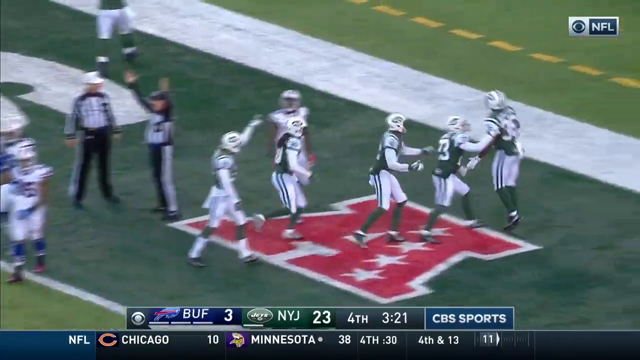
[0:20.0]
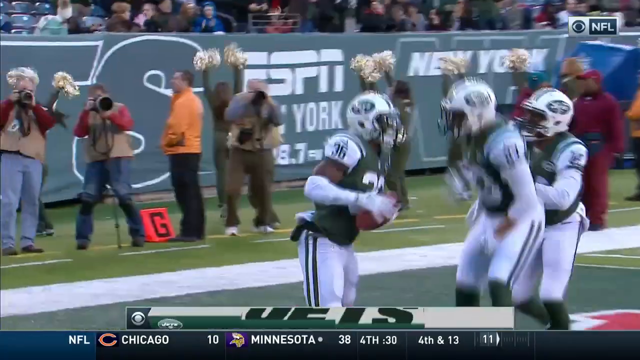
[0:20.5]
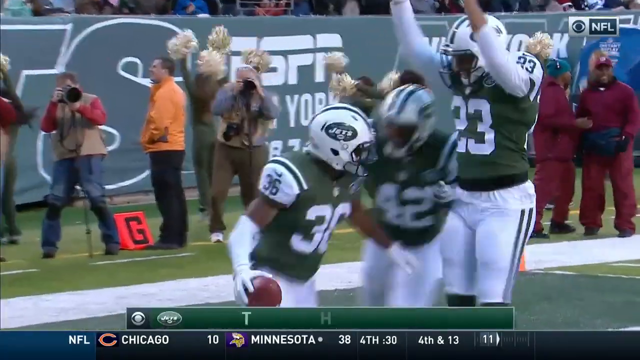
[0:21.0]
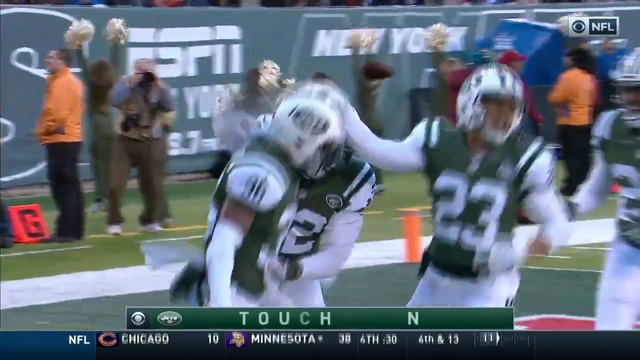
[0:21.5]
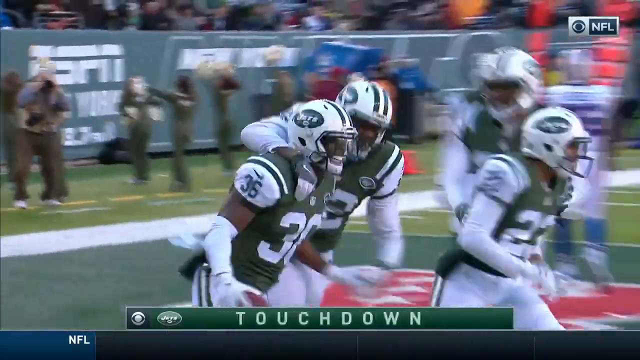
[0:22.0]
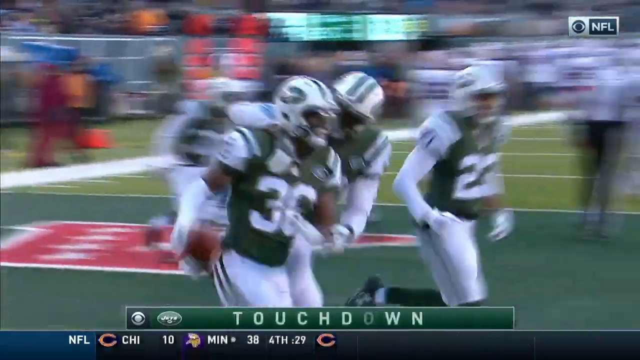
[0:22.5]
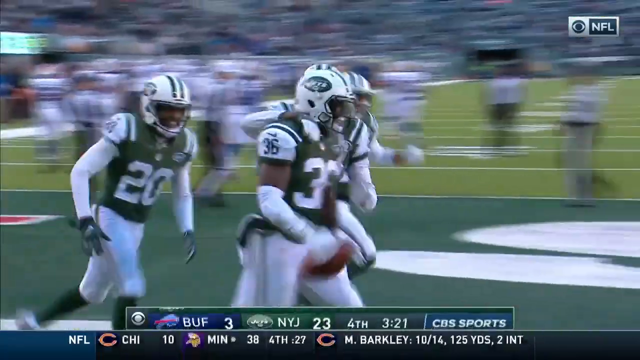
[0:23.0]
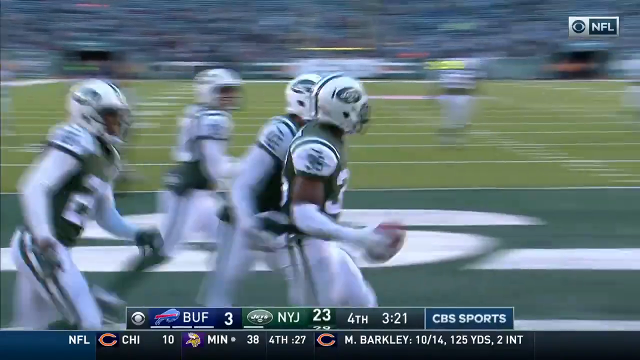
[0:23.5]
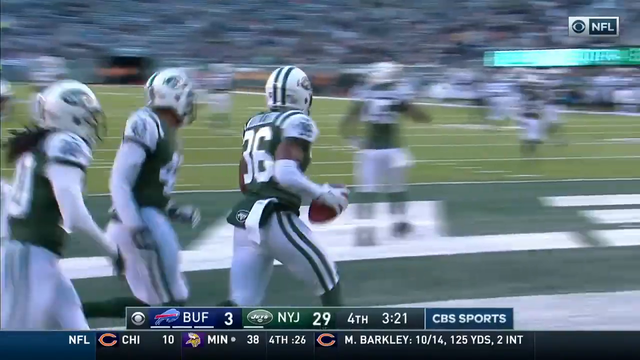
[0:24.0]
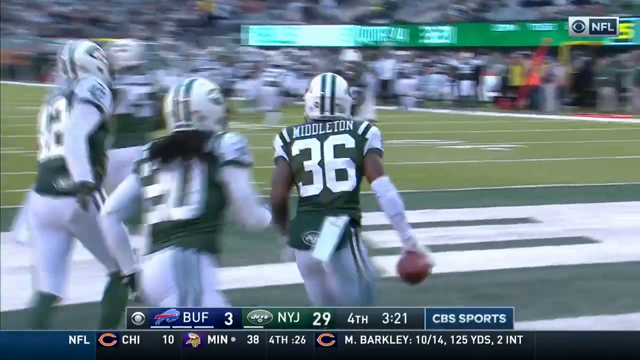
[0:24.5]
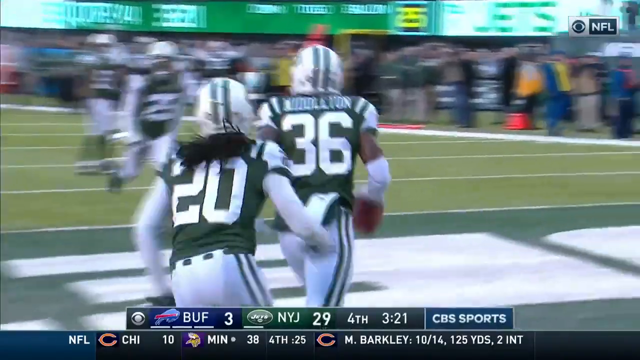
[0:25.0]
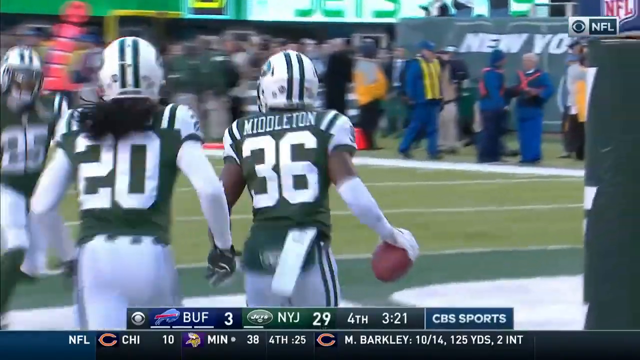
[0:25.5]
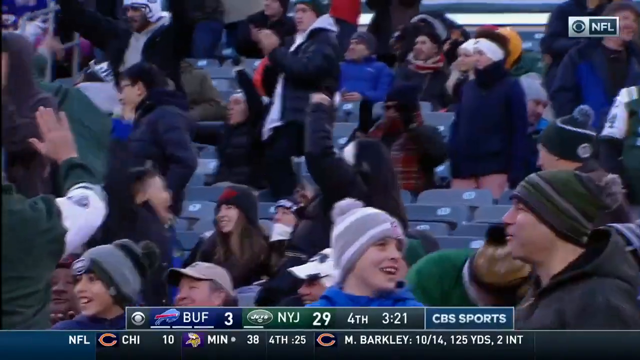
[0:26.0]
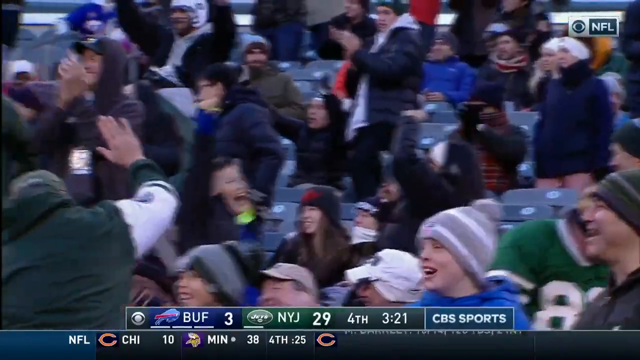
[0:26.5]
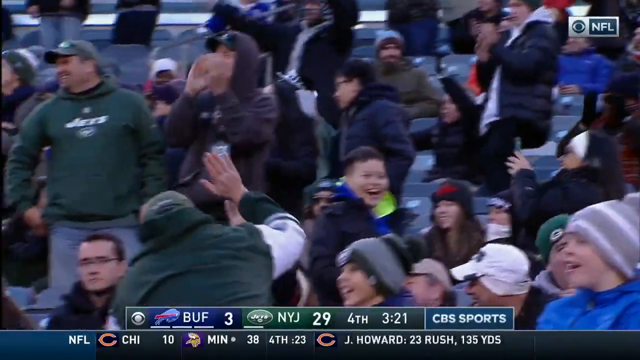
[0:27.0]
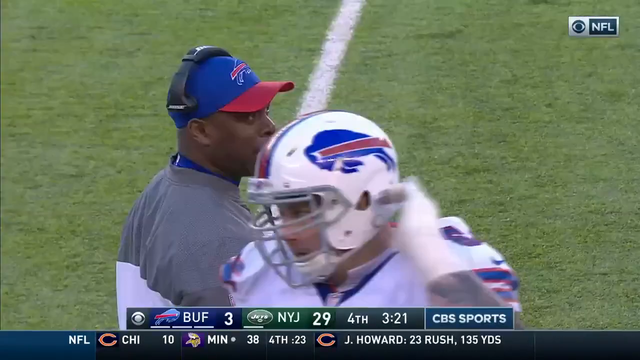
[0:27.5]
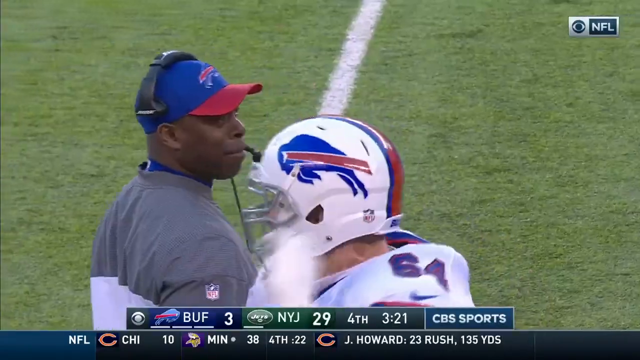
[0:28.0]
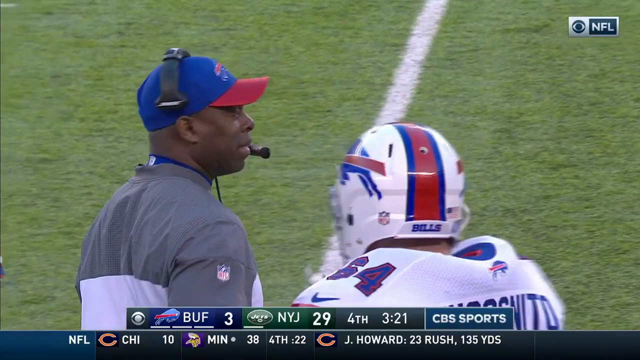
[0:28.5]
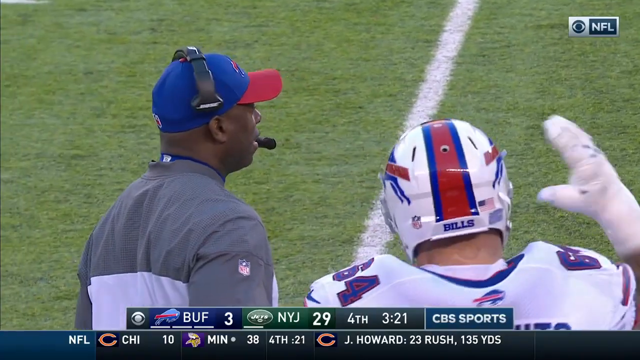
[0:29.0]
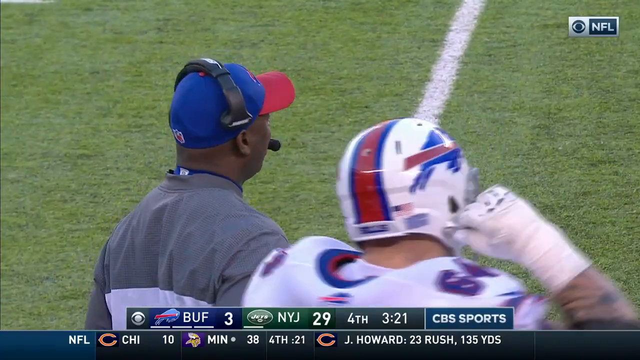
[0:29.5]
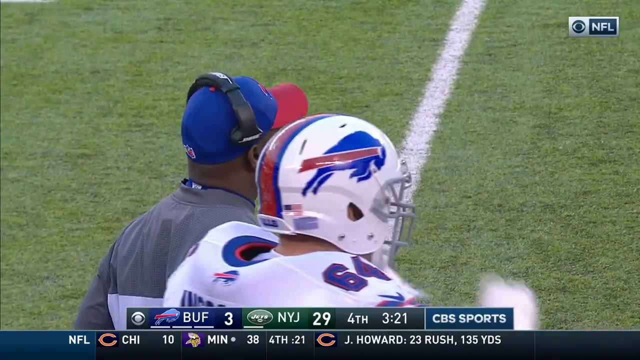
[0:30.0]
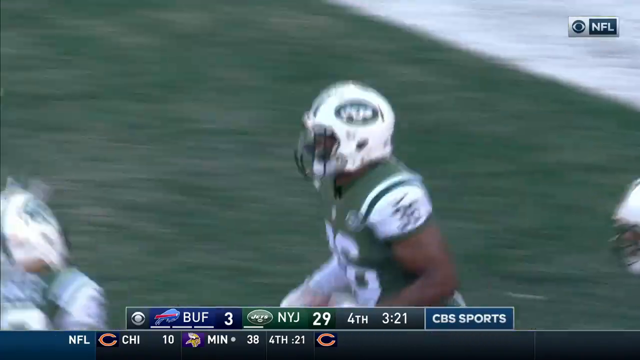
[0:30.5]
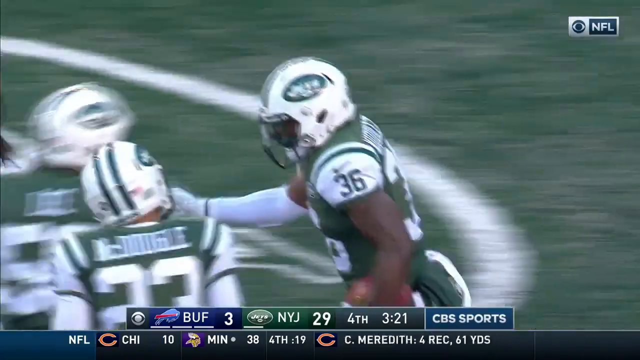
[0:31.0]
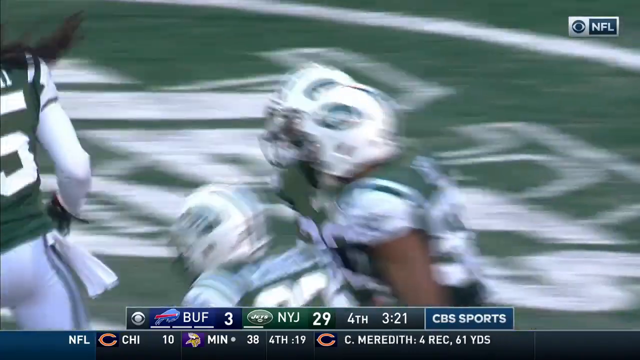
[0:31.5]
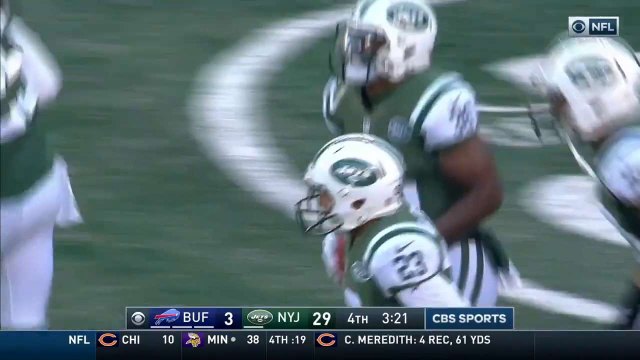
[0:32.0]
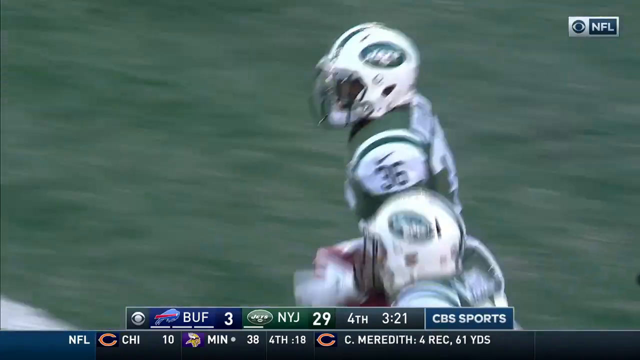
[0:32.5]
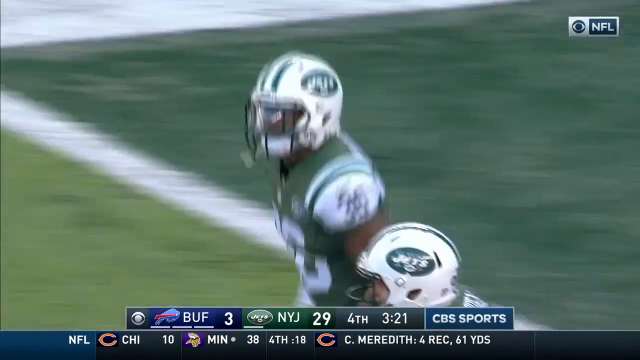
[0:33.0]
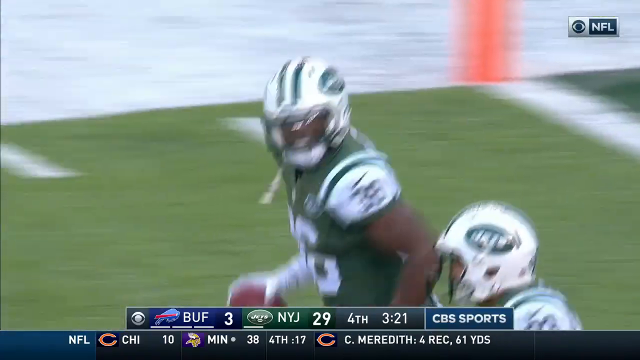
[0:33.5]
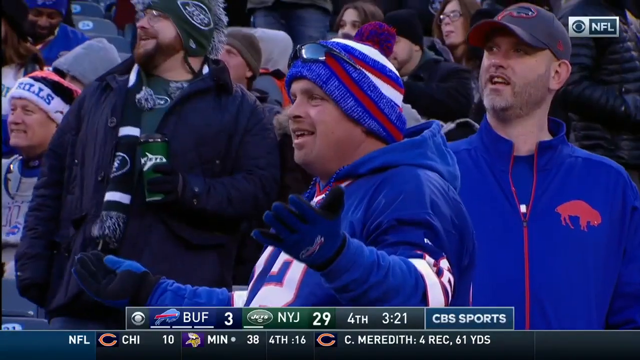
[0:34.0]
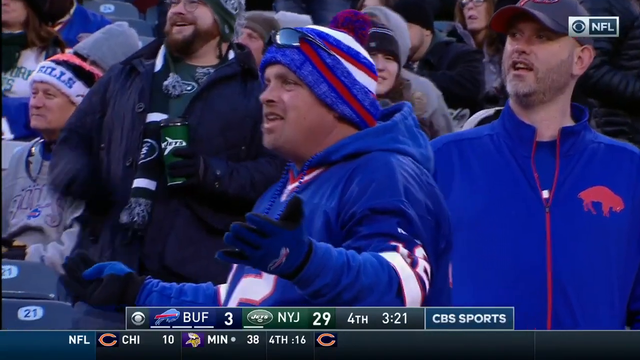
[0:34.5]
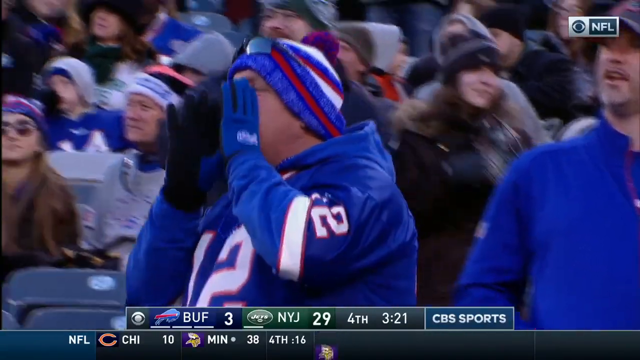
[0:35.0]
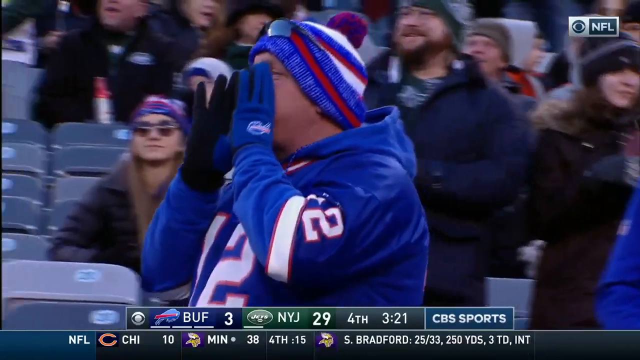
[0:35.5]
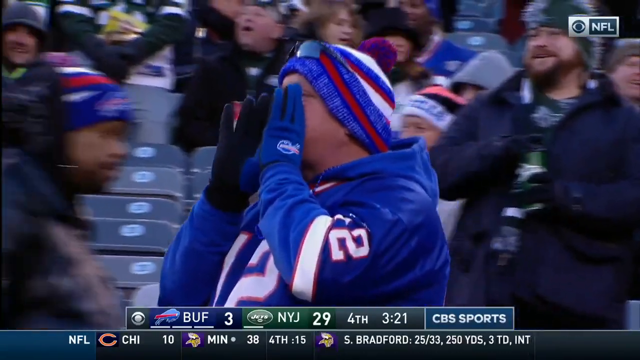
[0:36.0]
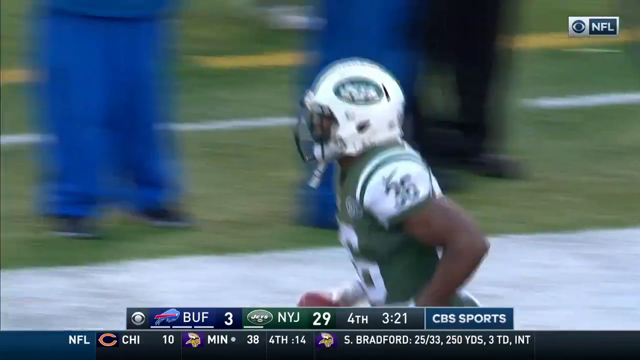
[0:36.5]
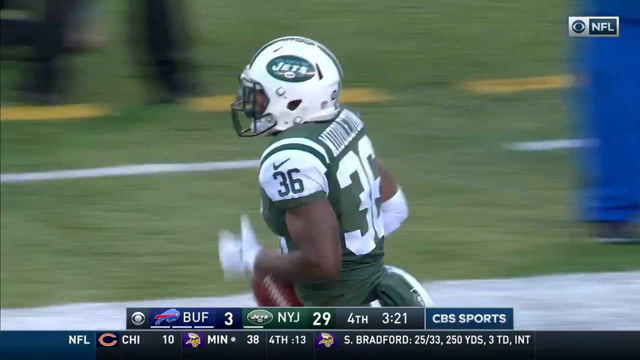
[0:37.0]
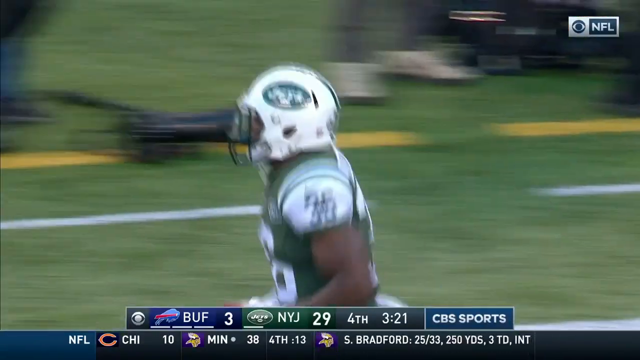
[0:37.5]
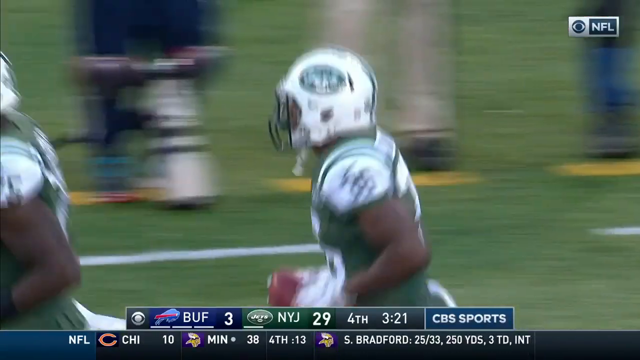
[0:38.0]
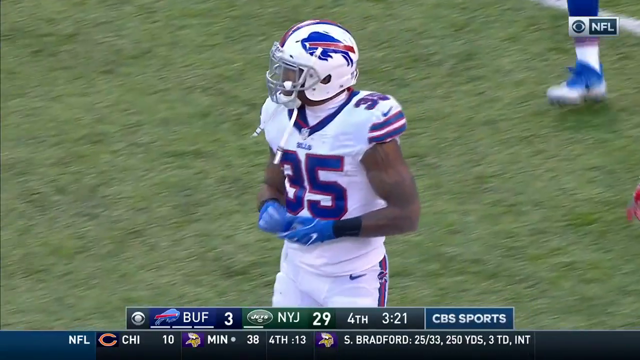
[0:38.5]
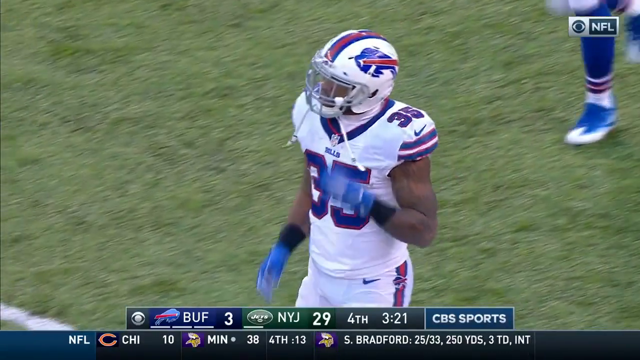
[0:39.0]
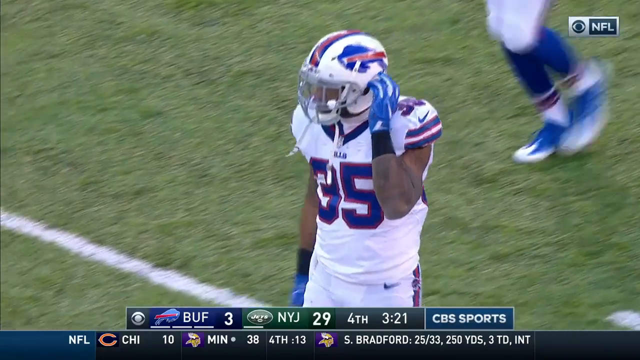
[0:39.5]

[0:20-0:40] In the end zone, the New York Jets run around celebrating. A man named Middleton is excited, and players are kind of jumping up and down. On the Buffalo sideline, people are upset and kind of booing. Jets players run through the back carrying the football. The crowd in that section cheers while the Buffalo coach has his head gear on. A couple of fans are booing, and some are wearing winter gear, so it is probably cold at the game.